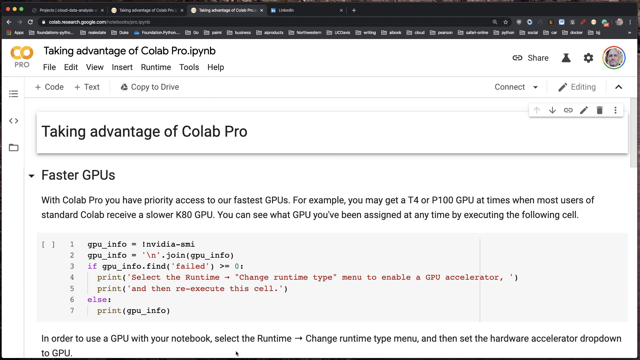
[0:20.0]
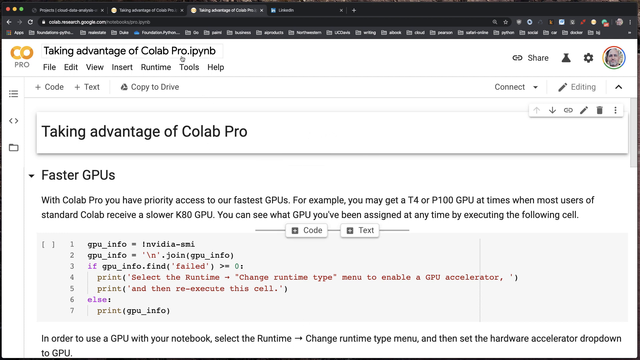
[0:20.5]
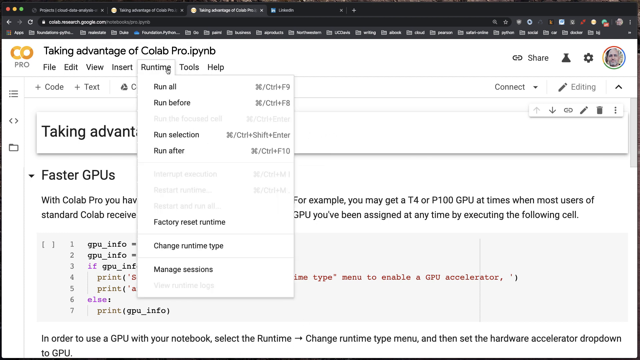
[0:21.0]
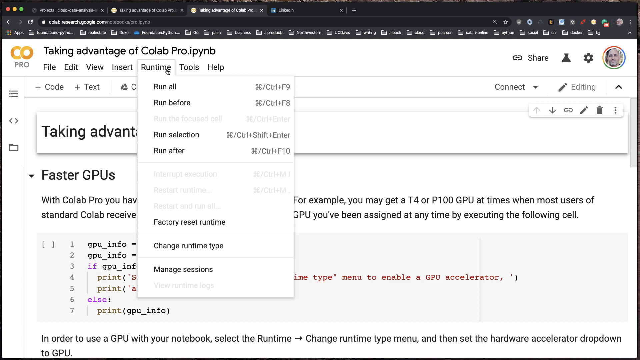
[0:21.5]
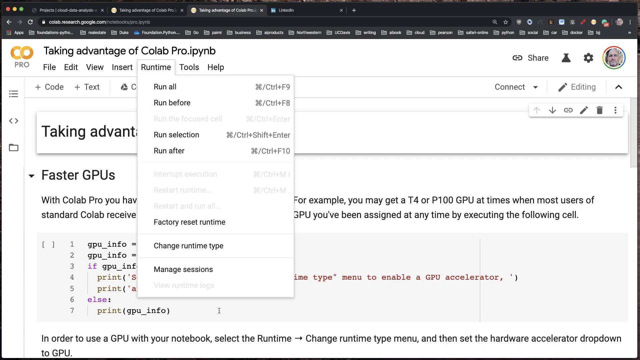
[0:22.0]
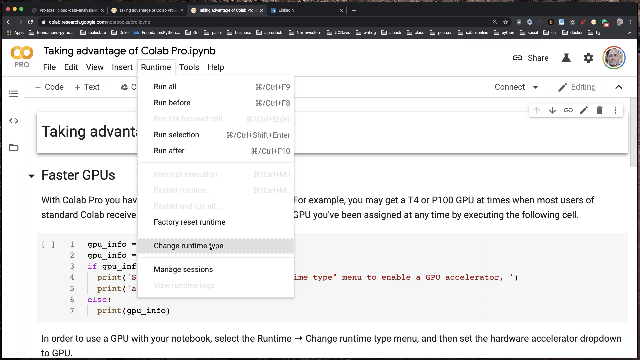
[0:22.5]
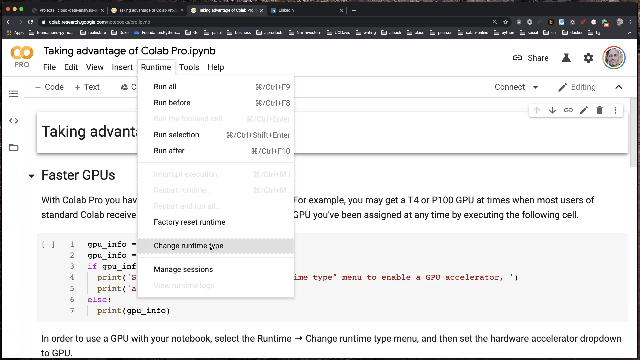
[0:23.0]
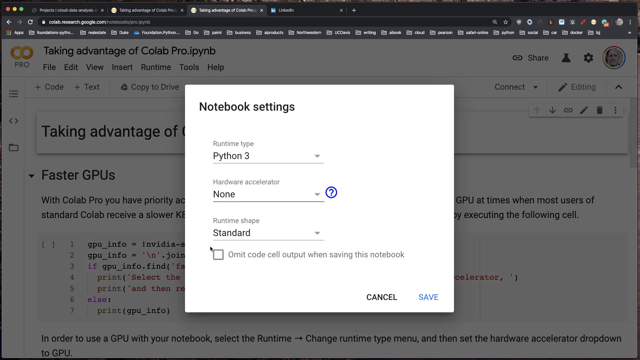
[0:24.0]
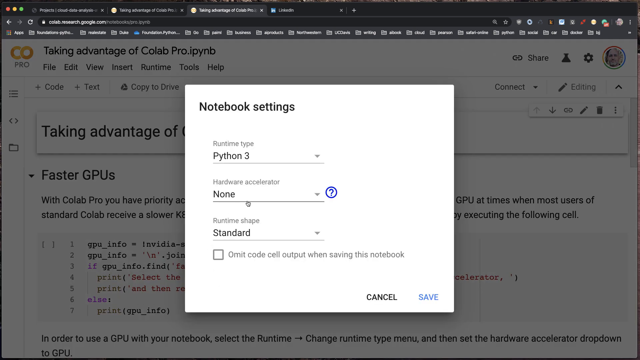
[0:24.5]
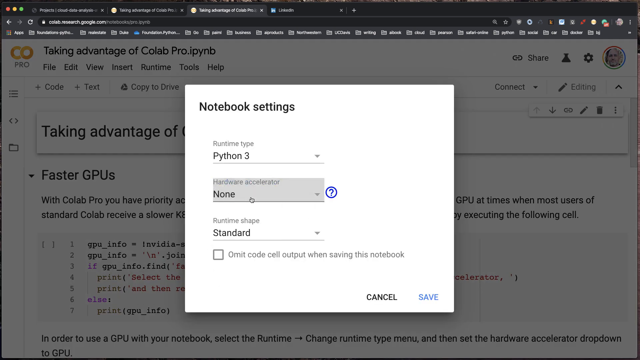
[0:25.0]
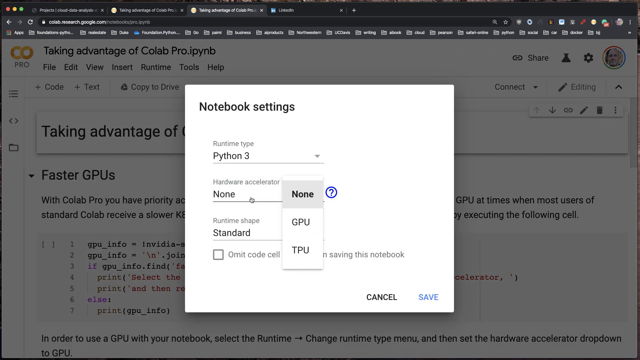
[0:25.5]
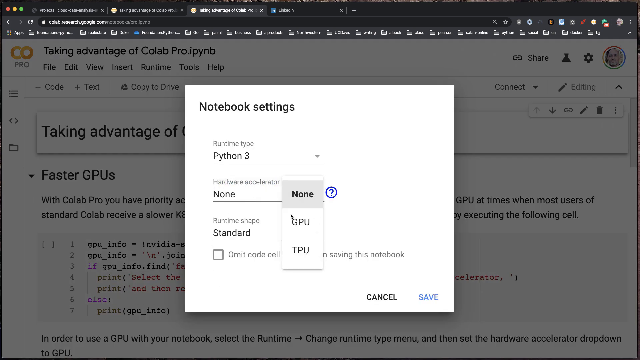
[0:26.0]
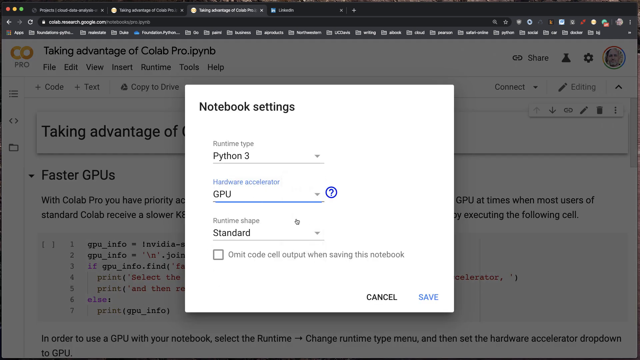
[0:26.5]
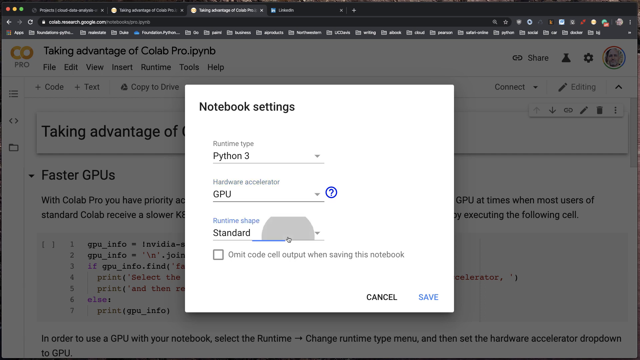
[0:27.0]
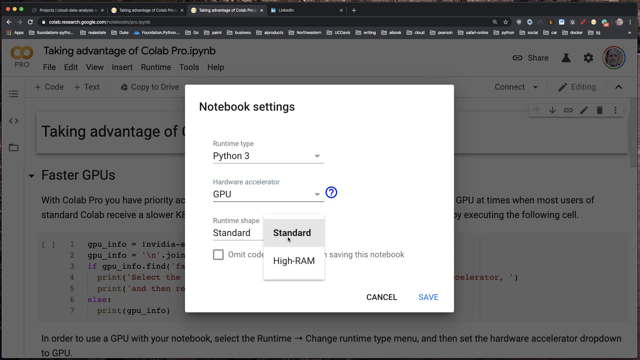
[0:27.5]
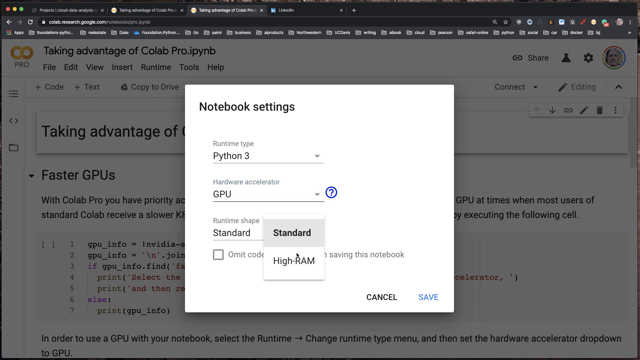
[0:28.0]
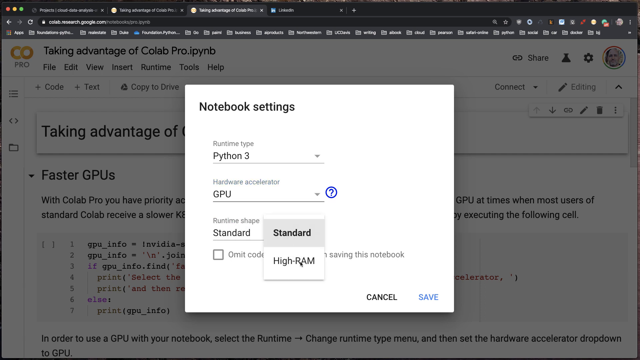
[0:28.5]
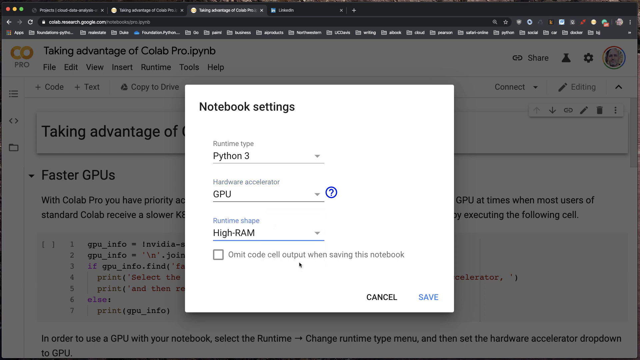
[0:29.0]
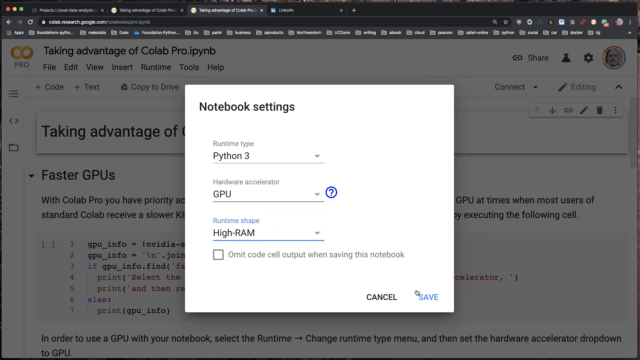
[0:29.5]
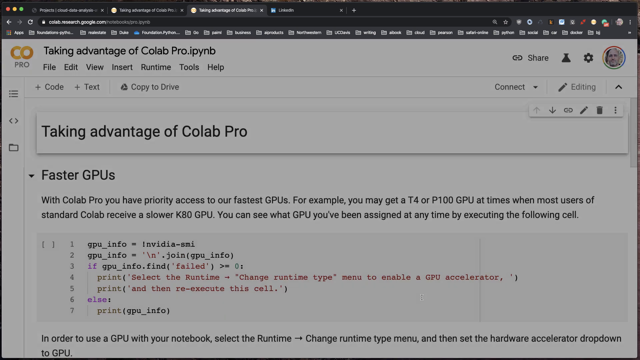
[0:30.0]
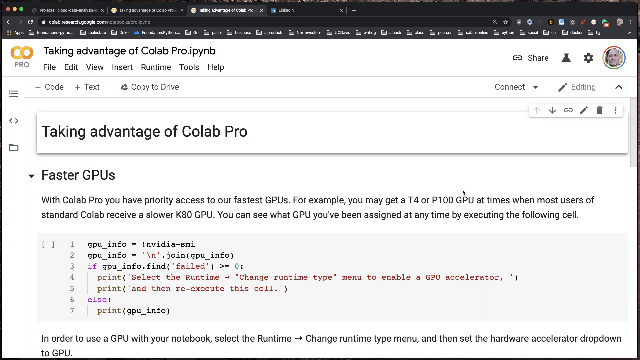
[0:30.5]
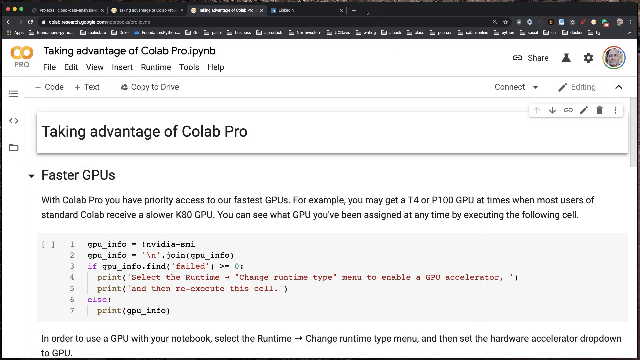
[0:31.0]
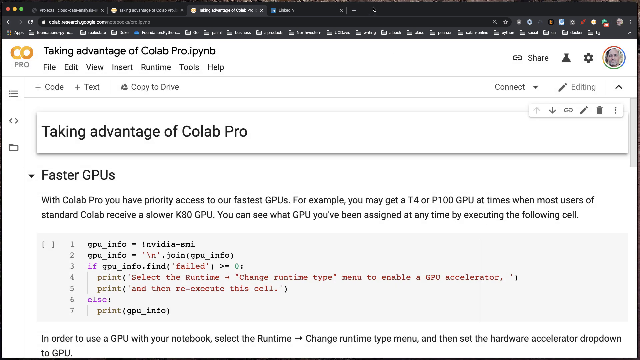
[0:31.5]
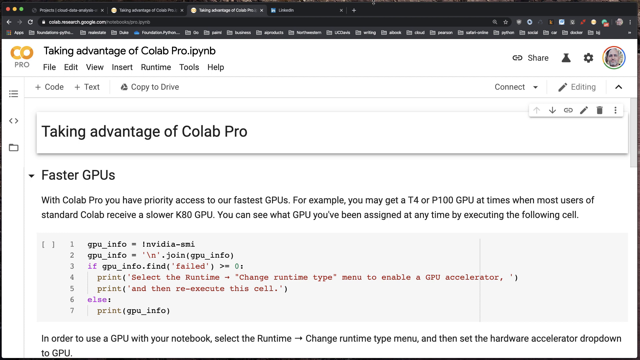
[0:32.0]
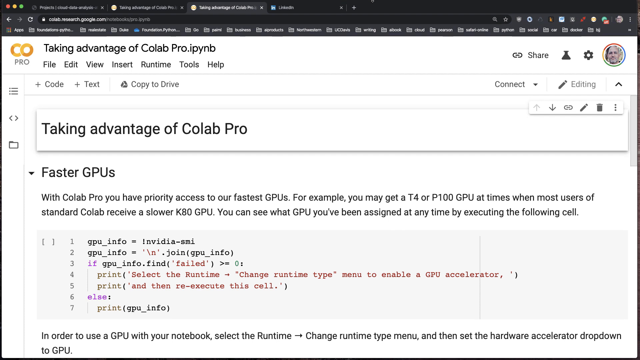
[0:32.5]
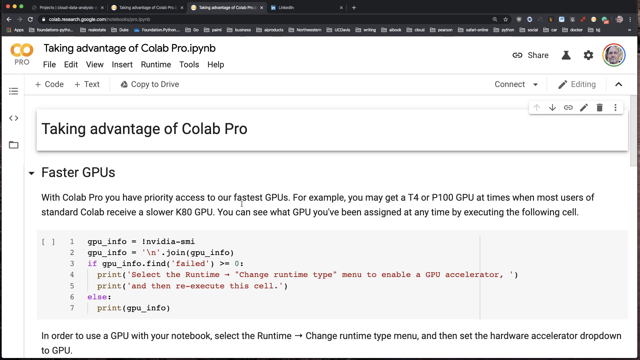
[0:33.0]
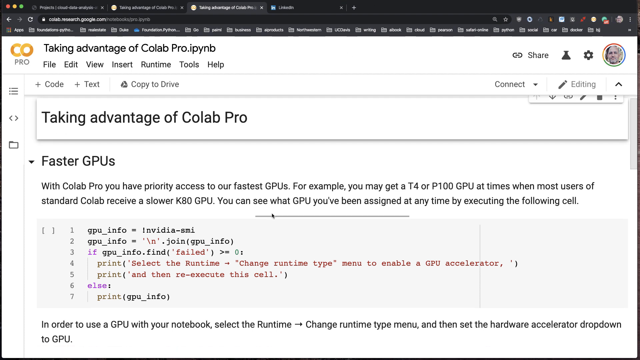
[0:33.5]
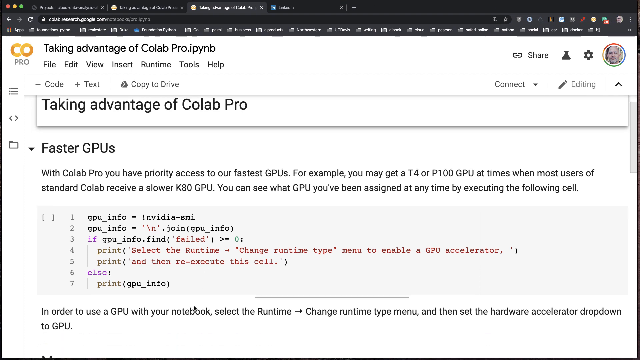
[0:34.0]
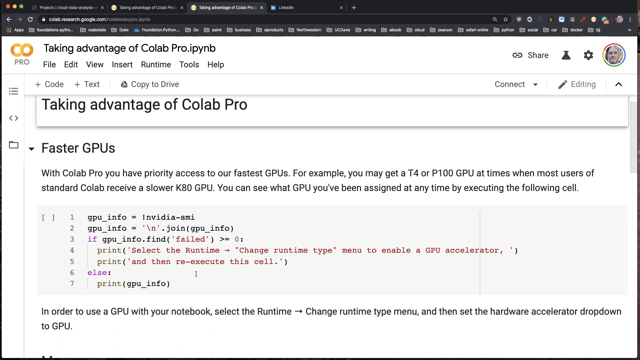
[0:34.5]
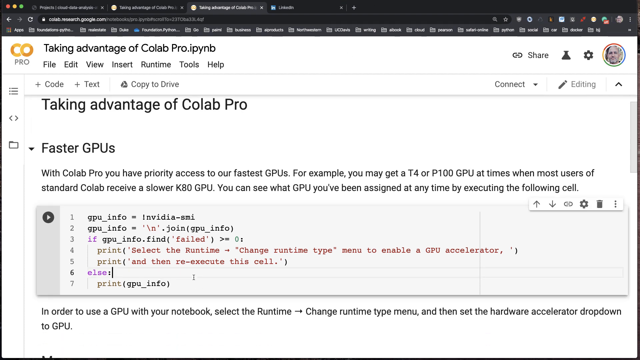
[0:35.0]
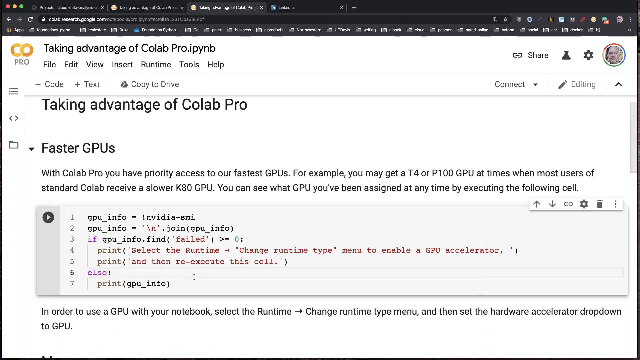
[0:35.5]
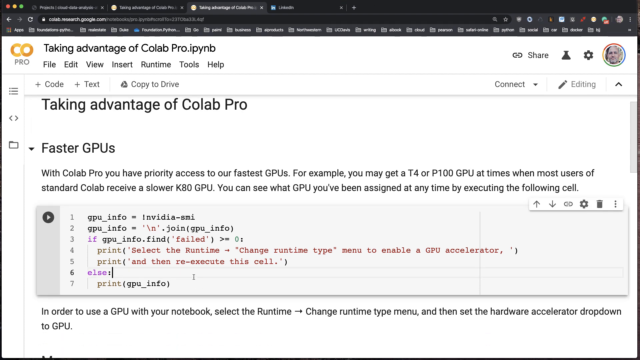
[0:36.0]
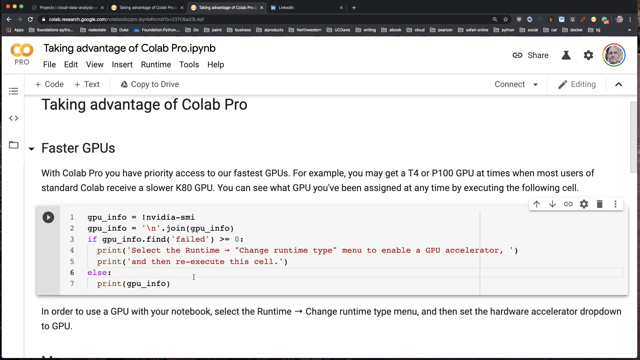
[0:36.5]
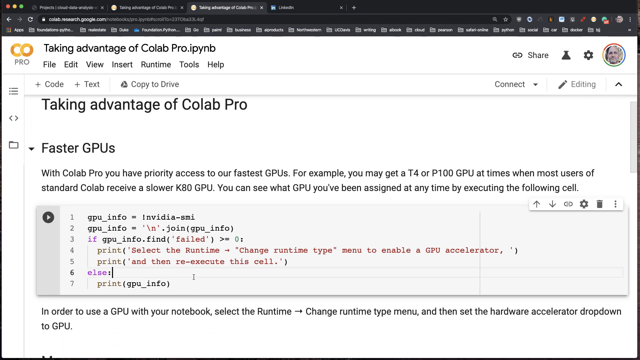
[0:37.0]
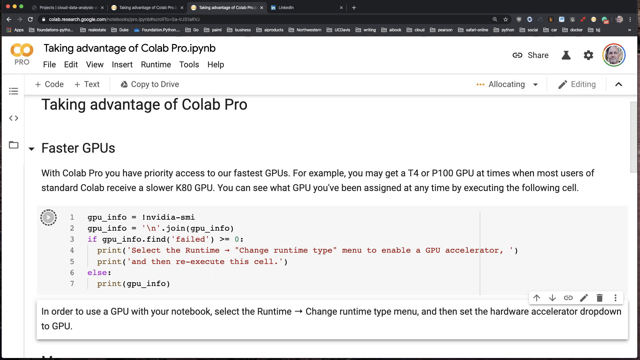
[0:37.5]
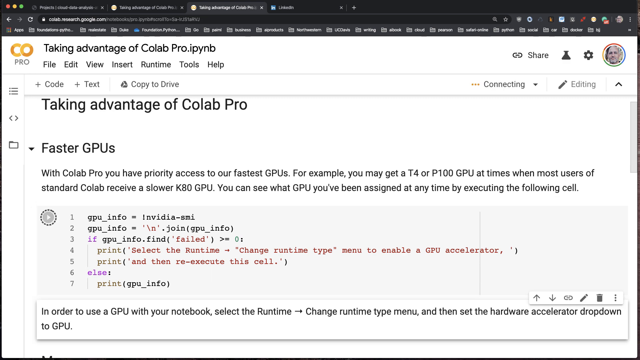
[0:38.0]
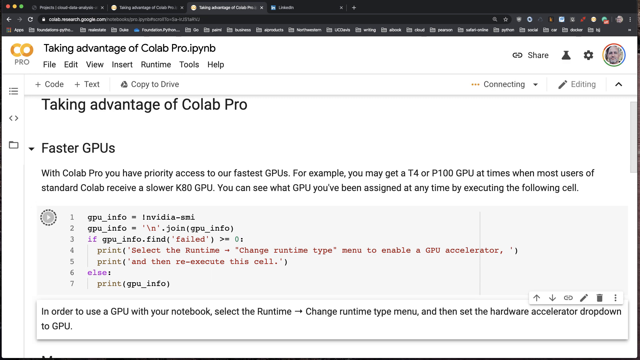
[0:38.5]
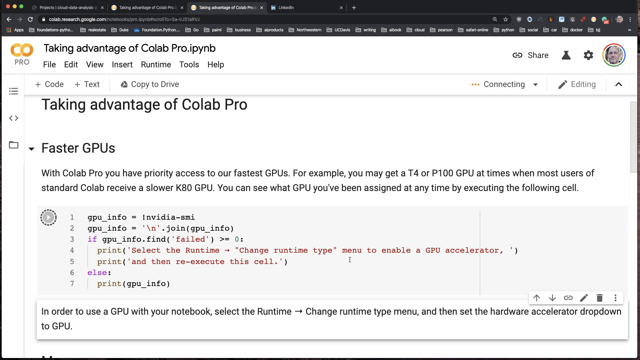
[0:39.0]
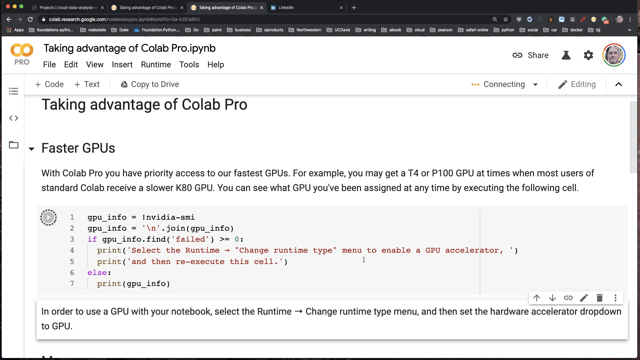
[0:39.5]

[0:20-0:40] The page titled "taking advantage of Collab Pro" with "pro.ipynb" is shown; it looks a bit outdated. Items such as "code," "test" and "copy to drive" appear, along with "taking advantage of the Collab Pro faster GPUs." The cursor moves to runtime, then notebook settings, showing options for standard and high RAM. What is almost certainly an infinity symbol serves as the icon on what looks like a text editing page, with a menu of file, edit, view, insert, runtime and tools, and a share option; it seems to be the dashboard for Collab Pro. Python possibly appears on the page. Text reads "GPU info" and "NVIDIA," and a "run all" option is visible. On the runtime page, a man appears to be changing the settings, seemingly personalizing the Collab Pro setup.